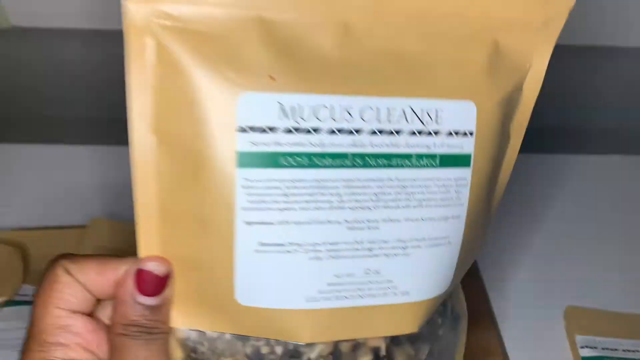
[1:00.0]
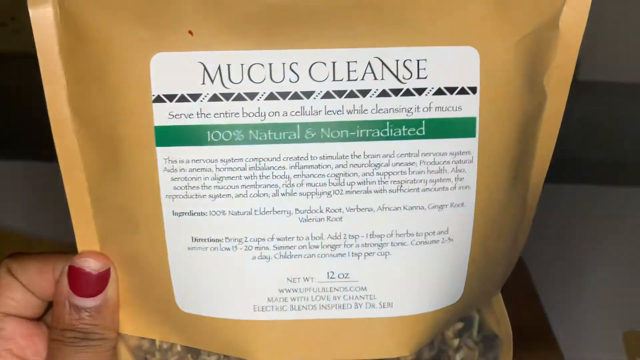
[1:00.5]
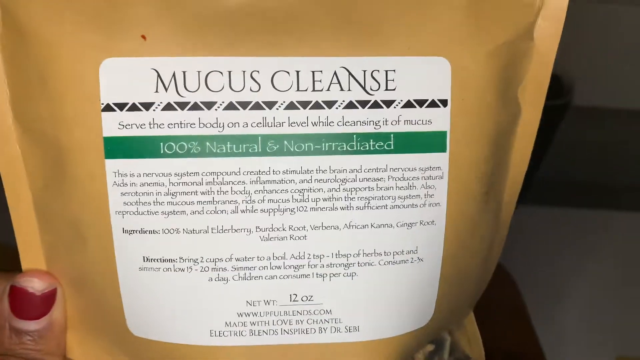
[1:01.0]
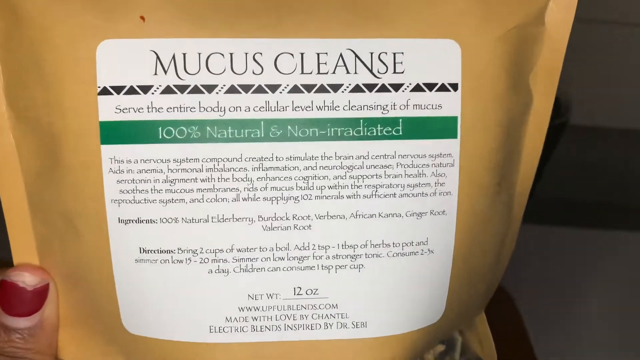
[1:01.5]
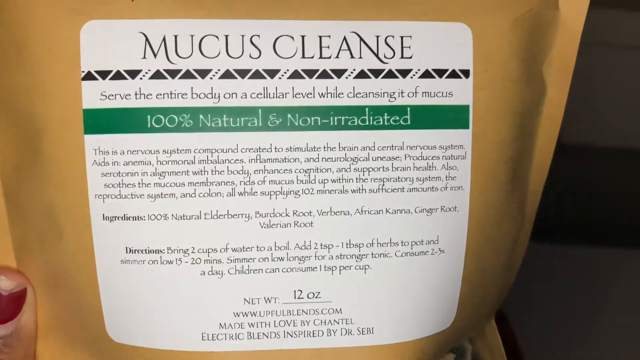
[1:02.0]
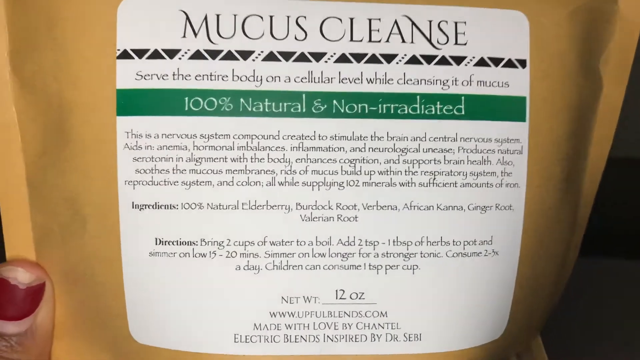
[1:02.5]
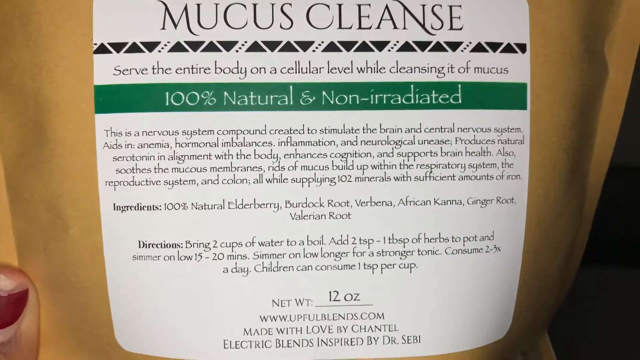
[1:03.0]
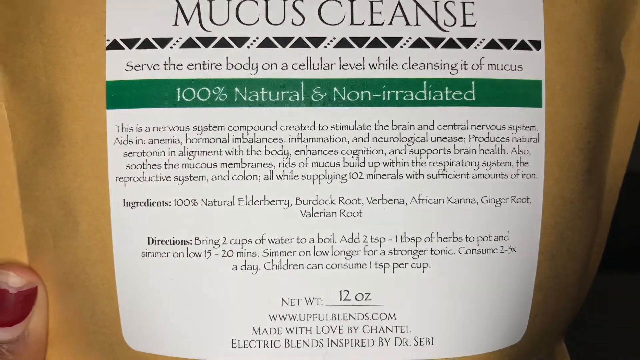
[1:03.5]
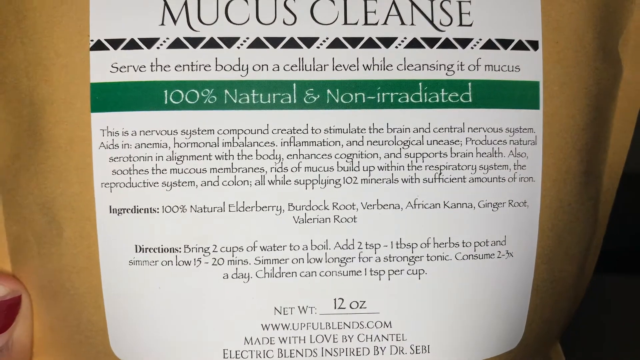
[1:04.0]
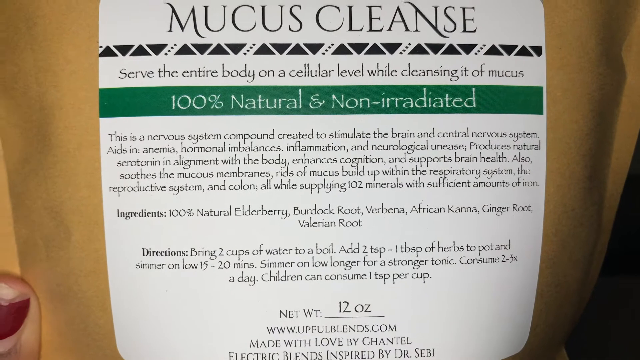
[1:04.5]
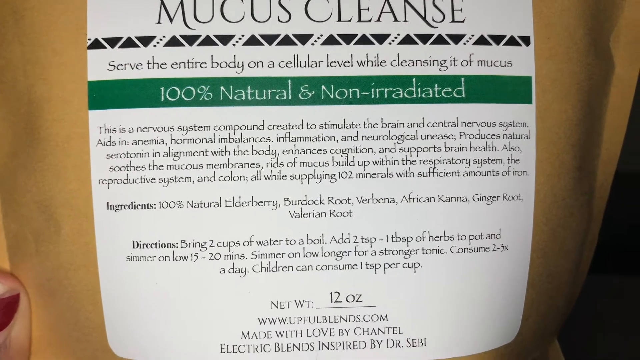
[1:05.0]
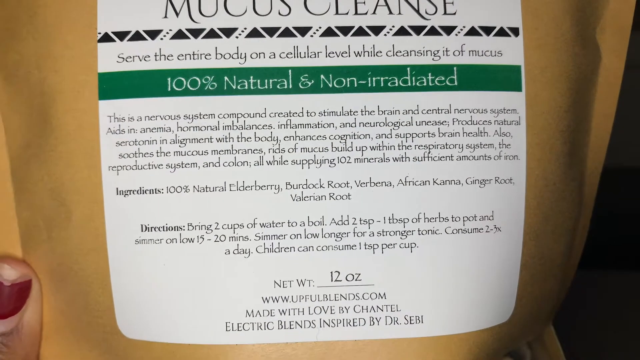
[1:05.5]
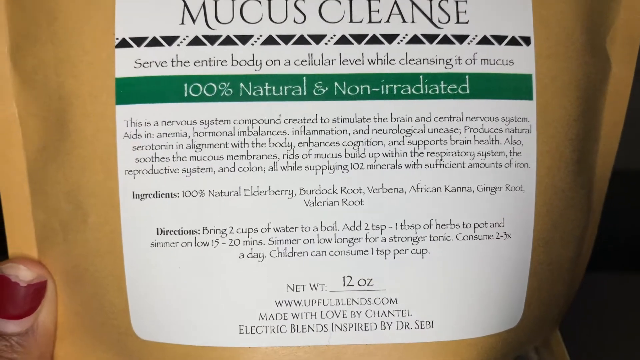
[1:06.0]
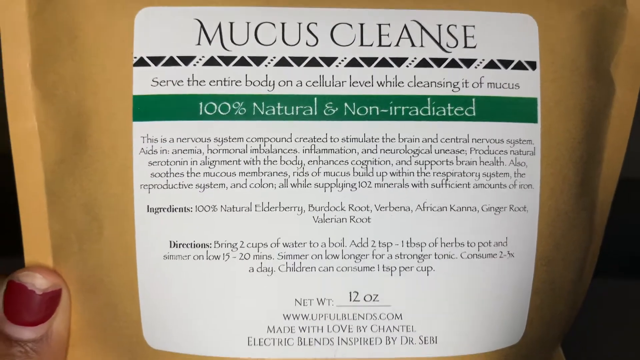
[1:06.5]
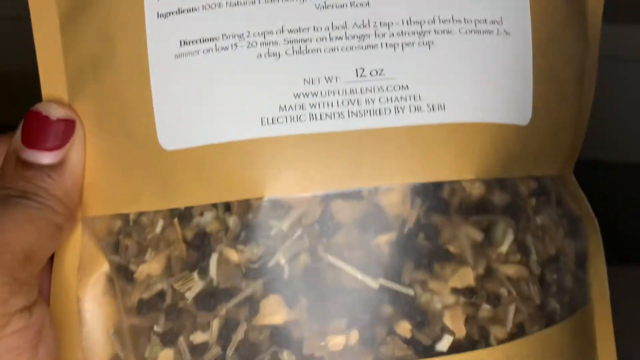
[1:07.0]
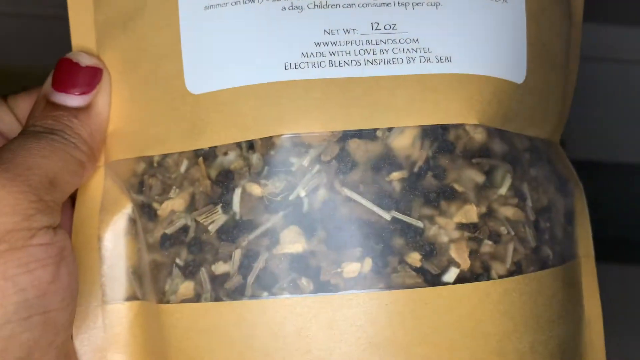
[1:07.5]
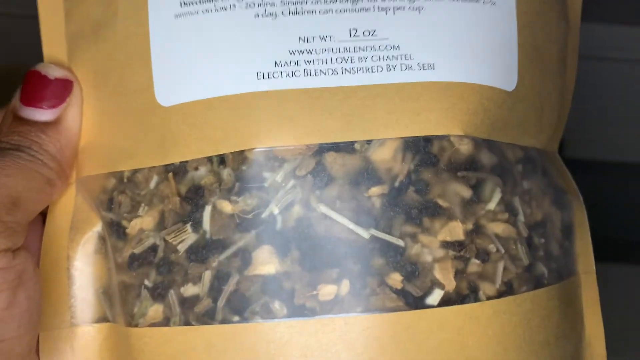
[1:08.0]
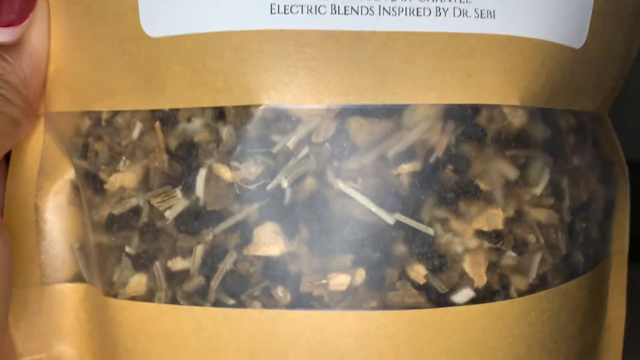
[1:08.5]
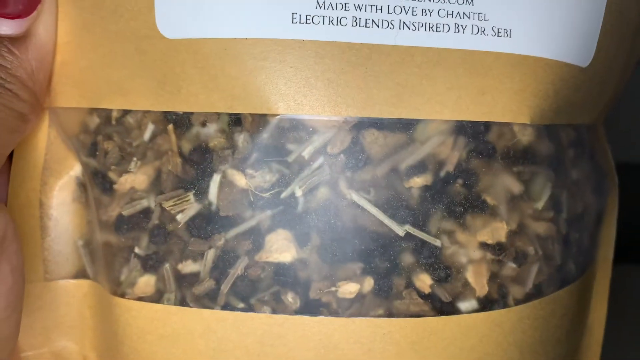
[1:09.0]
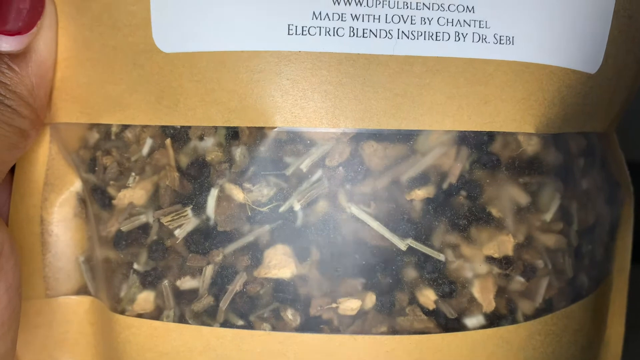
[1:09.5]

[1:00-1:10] Another product appears: a khaki, light brown package with a white sticker written in black and green. It is for mucus cleanse, and the writing says it is to cleanse the nervous system and clear mucus. The contents look like herbs. A woman holds the bag and shows it to the viewer. It reads "100% natural and non-irradiated" and also has instructions for use. A corner written in red reads "102 minerals and highest iron content in the world," and the weight is 12 oz. It is a bag of dried herbs for mucus cleansing. Four packets are still visible; the writing on each is different, but the bags are designed, labeled and packaged the same. Nothing changes except when the woman puts the bag down. The instructions cannot be read exactly, but they relate to what is inside the package.